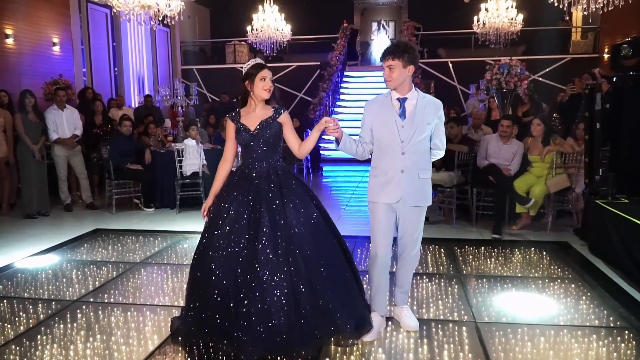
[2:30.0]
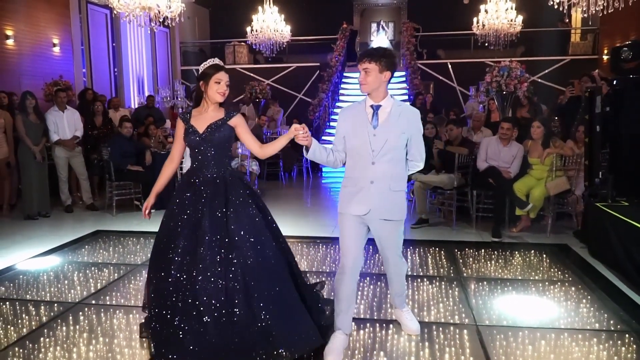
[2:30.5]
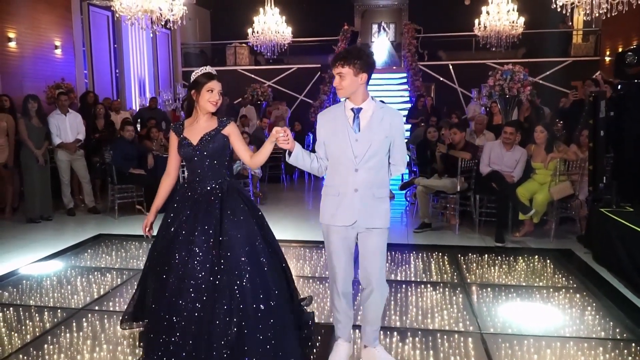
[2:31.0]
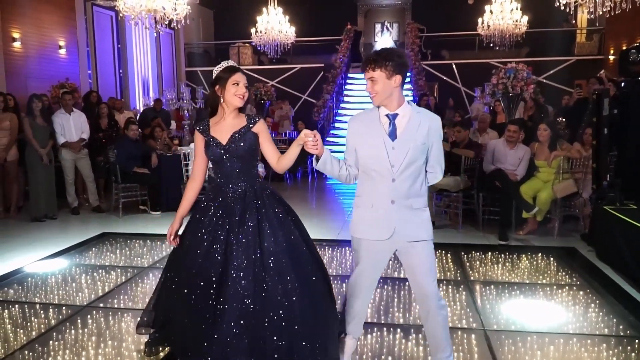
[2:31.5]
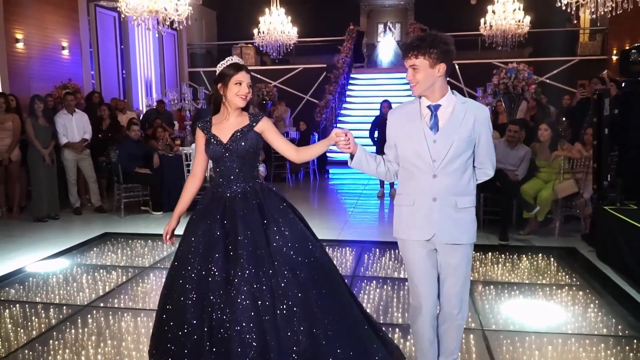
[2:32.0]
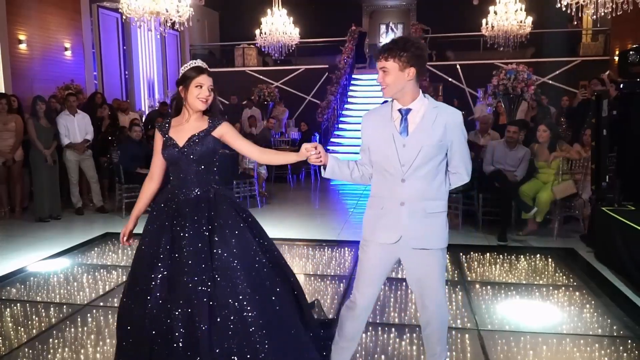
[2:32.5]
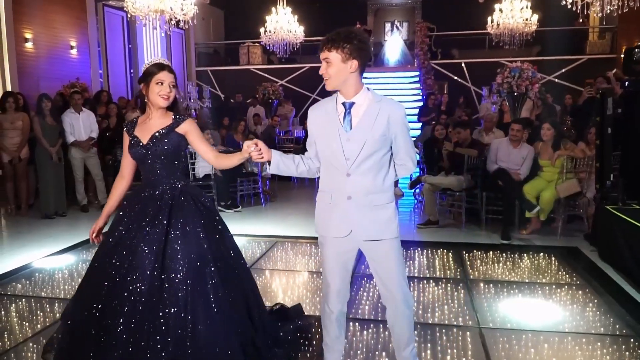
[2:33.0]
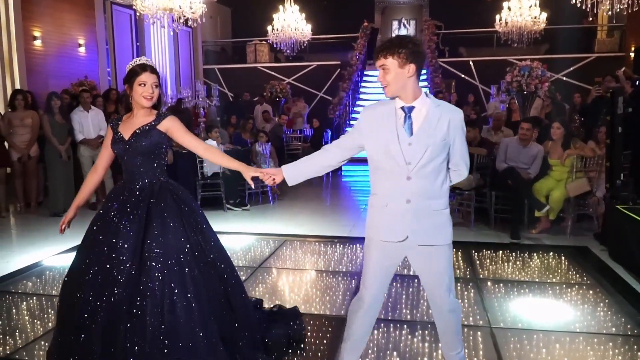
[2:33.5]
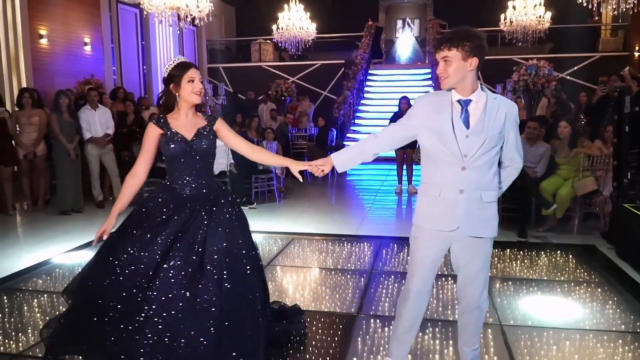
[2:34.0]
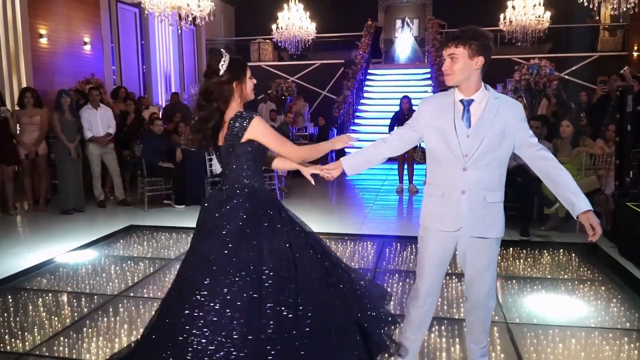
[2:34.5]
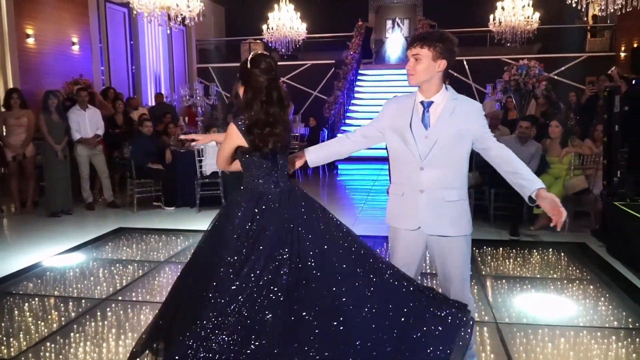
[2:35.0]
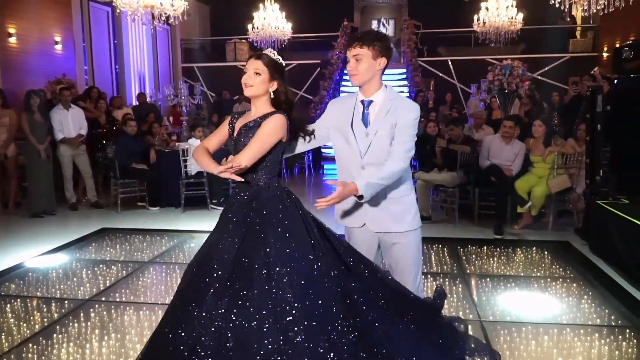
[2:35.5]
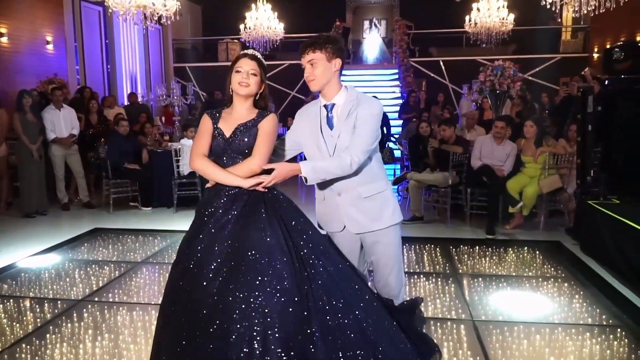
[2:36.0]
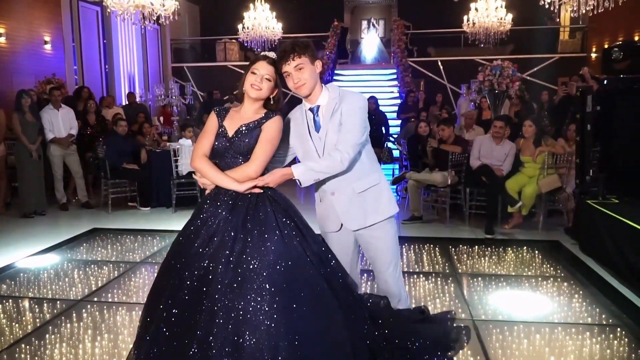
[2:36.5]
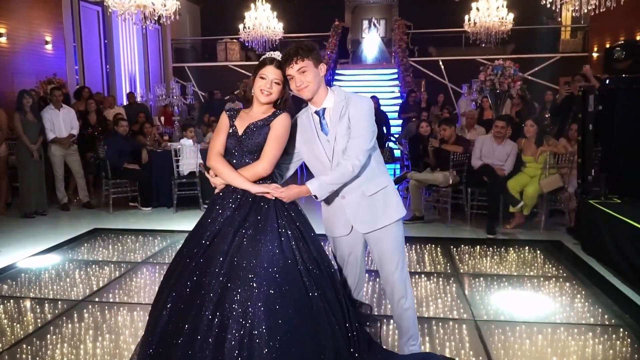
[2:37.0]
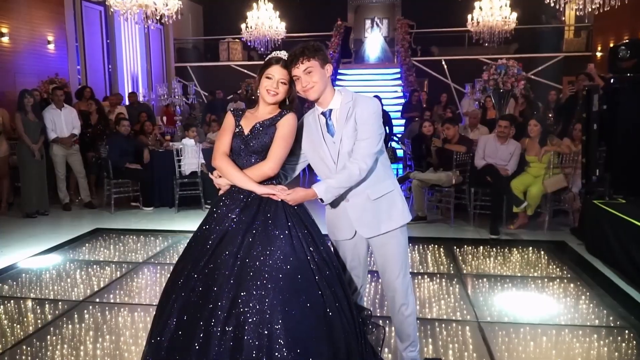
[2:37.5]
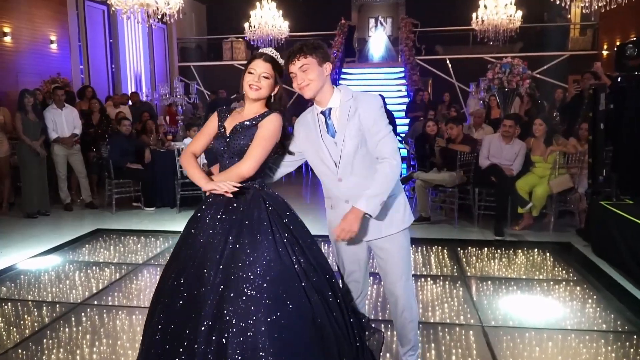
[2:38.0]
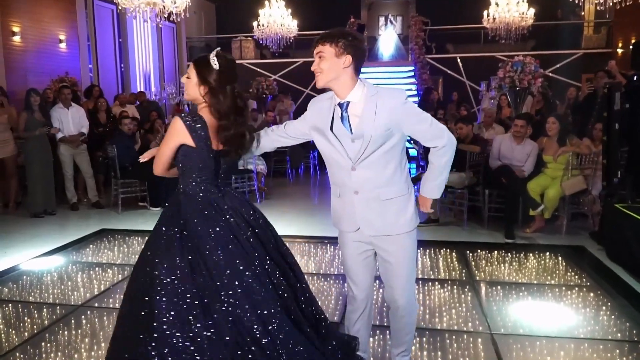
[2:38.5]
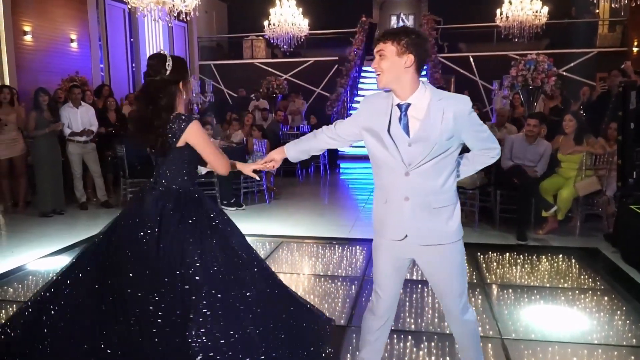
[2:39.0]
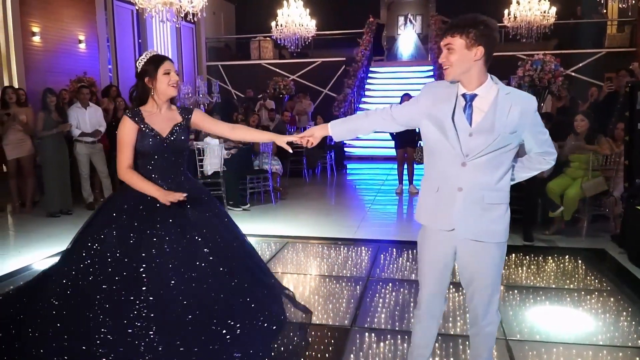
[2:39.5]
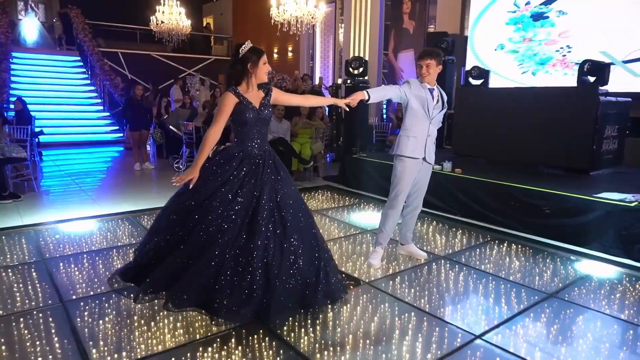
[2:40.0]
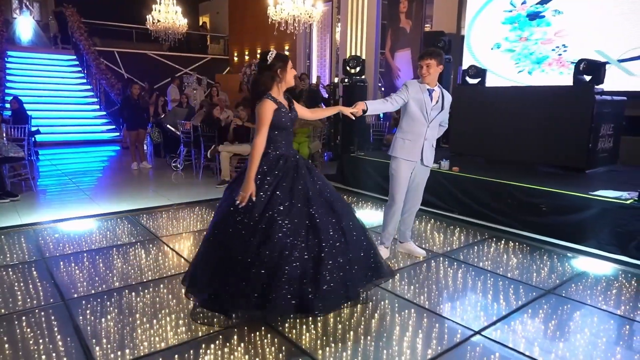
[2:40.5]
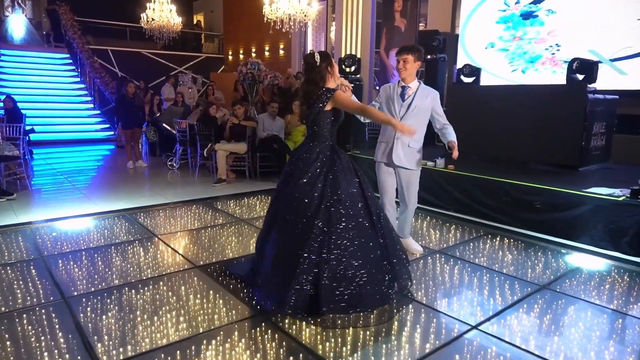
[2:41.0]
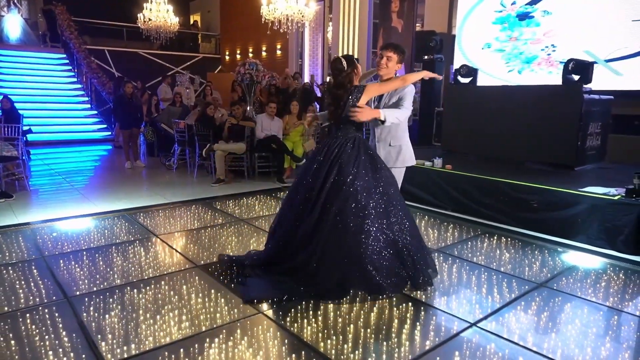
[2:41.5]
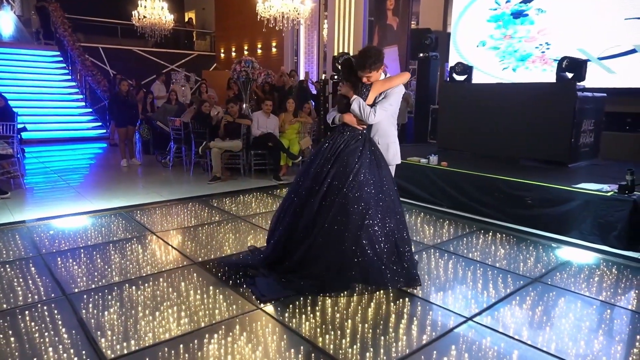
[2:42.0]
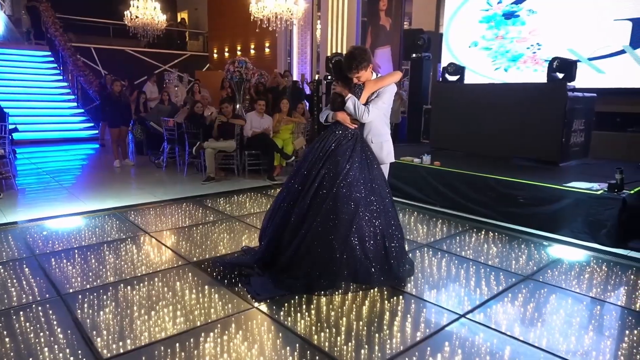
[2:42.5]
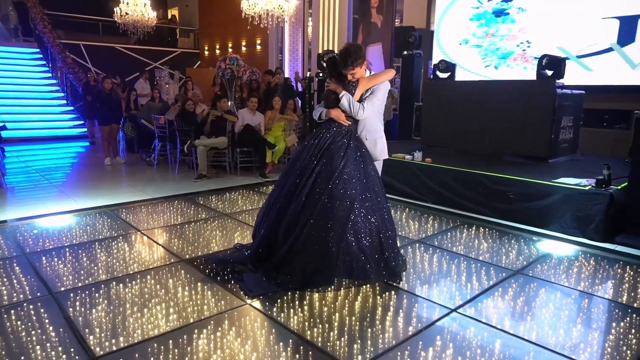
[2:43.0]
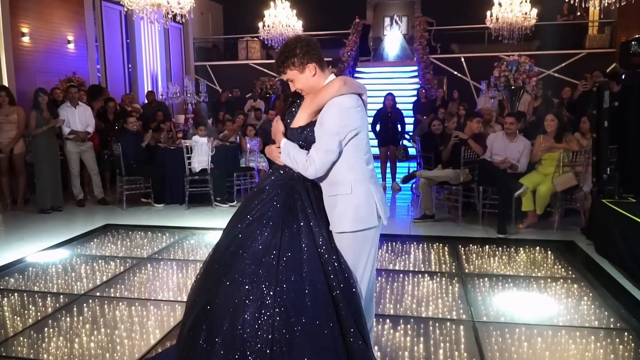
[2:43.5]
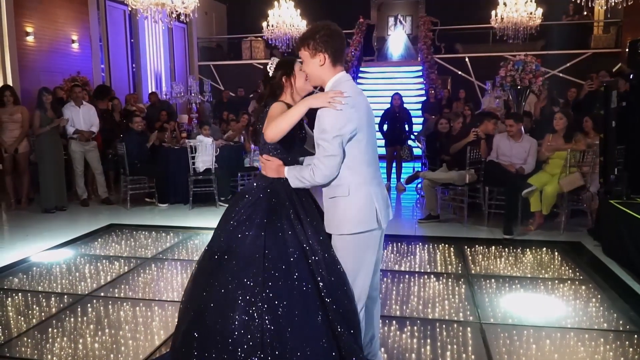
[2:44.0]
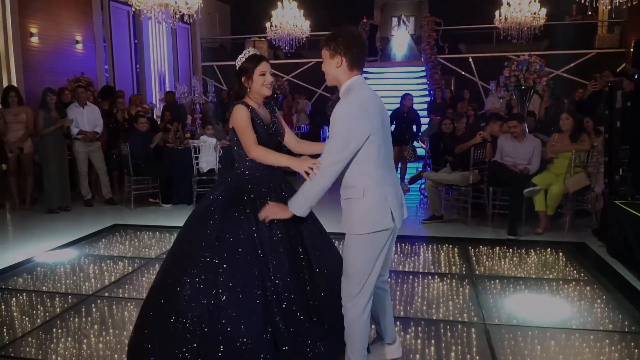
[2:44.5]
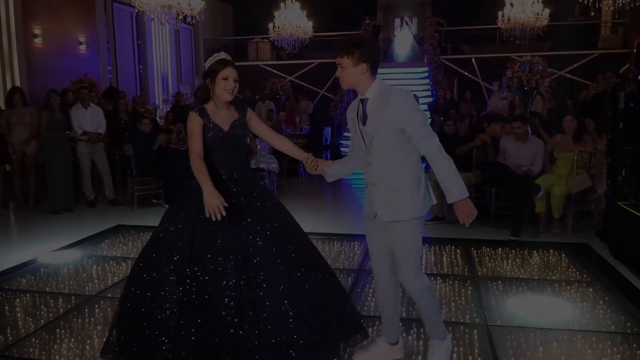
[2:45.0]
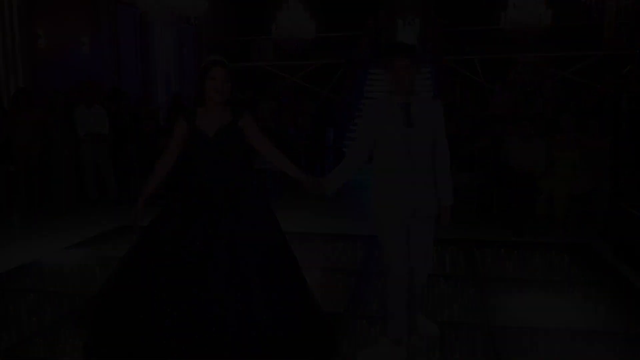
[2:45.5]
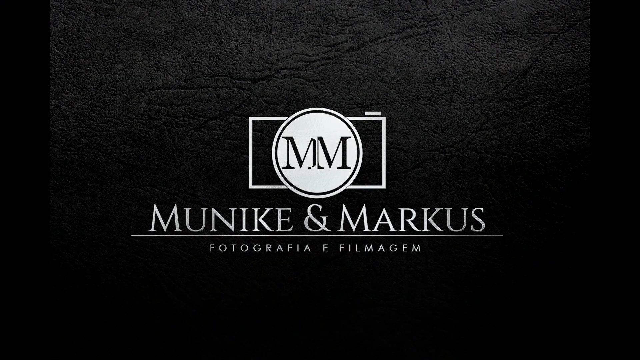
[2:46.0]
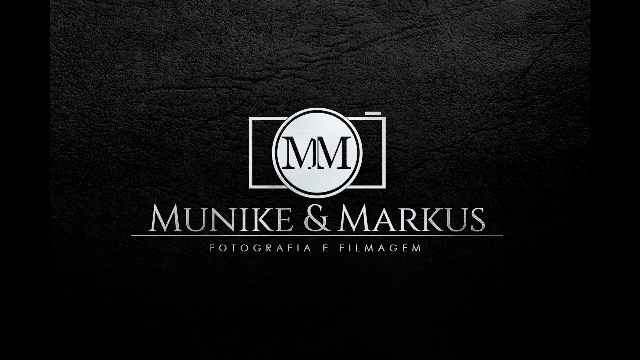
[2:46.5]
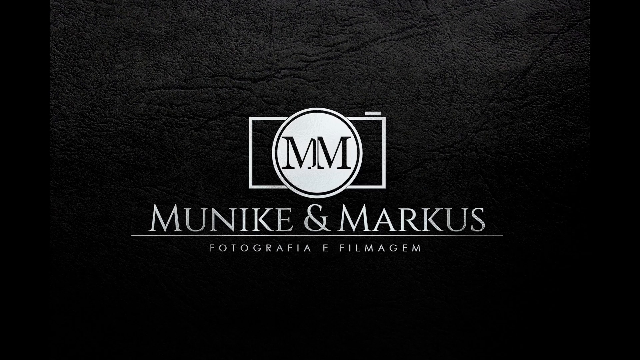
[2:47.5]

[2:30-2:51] The young couple keeps dancing on the stage; they have not been facing each other, but they have been looking at each other. The dance seems to be coming to an end: they hug and hold hands in the middle of the stage, kind of facing the camera. The room looks like a small ballroom with chandeliers hanging from the ceiling, and the custom-made stage has lighting underneath its floor. Several dozen people are around them, some sitting in chairs at tables and others standing and watching, probably family and friends gathered to celebrate the occasion.